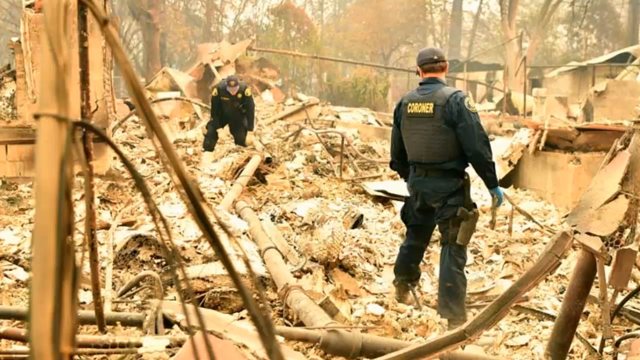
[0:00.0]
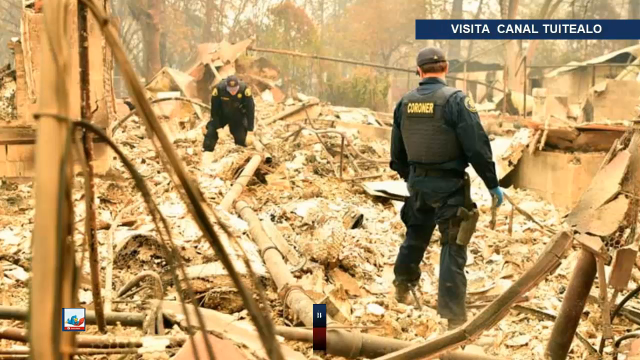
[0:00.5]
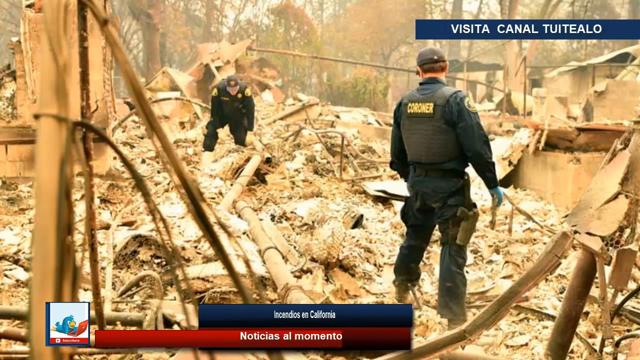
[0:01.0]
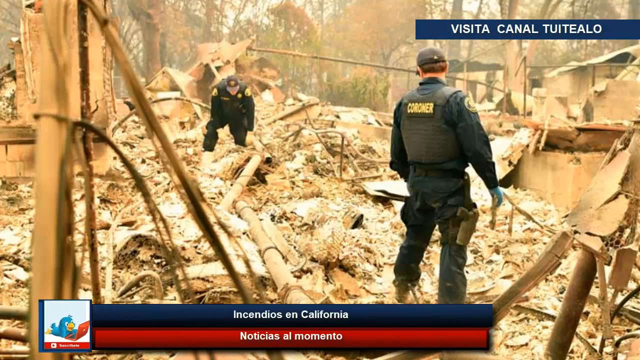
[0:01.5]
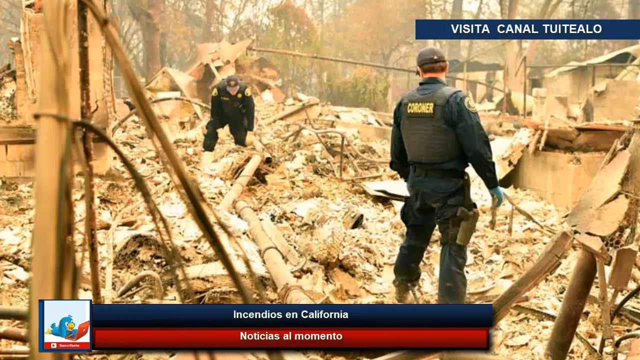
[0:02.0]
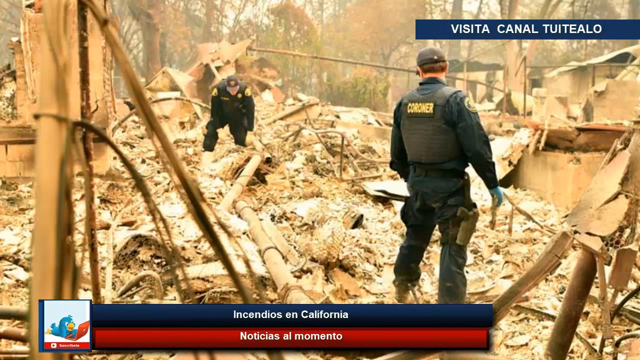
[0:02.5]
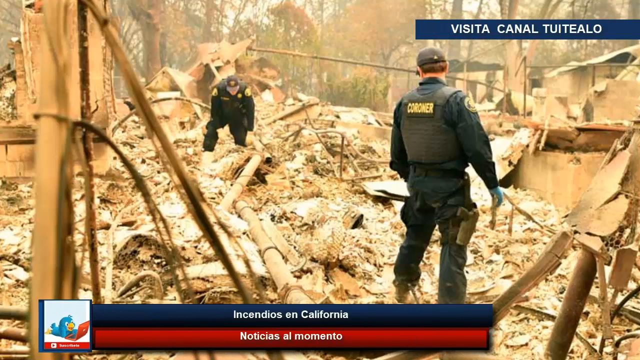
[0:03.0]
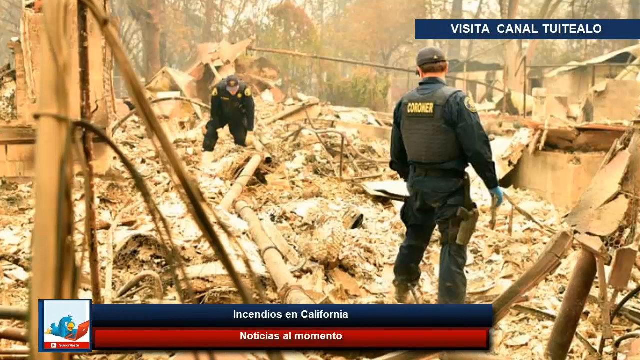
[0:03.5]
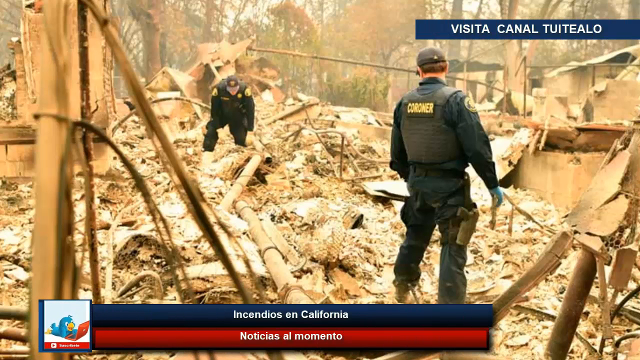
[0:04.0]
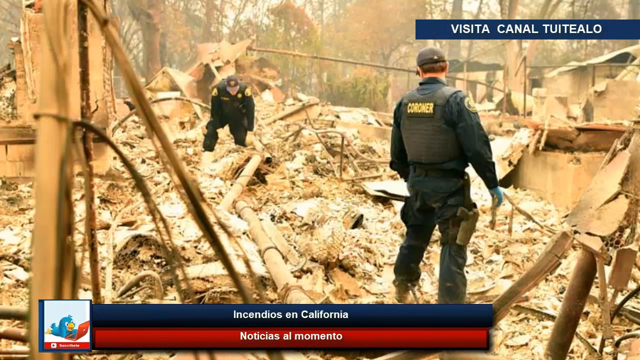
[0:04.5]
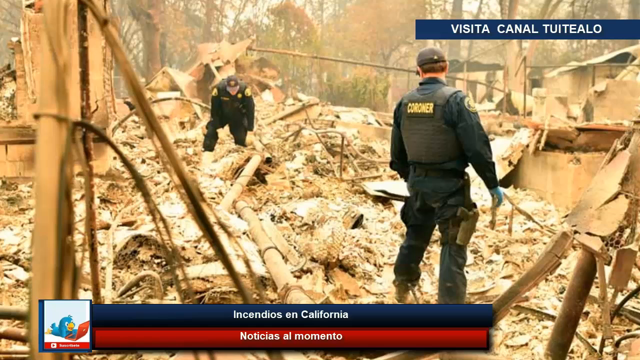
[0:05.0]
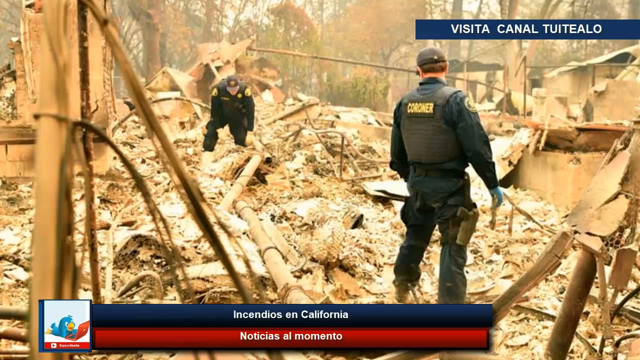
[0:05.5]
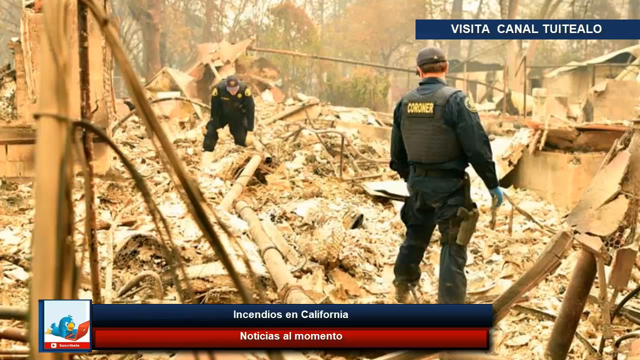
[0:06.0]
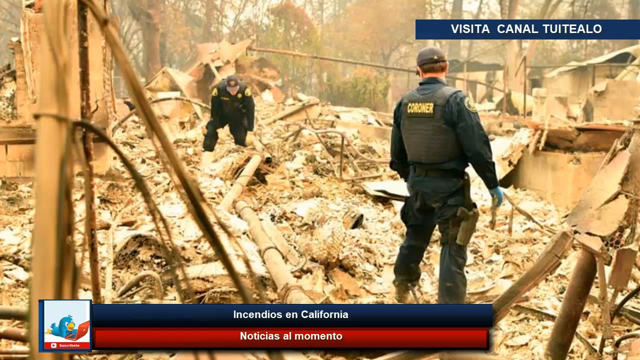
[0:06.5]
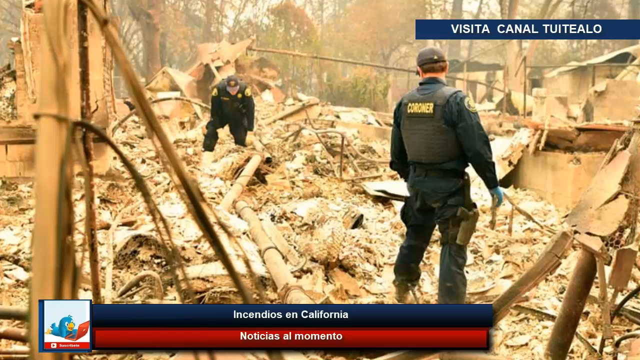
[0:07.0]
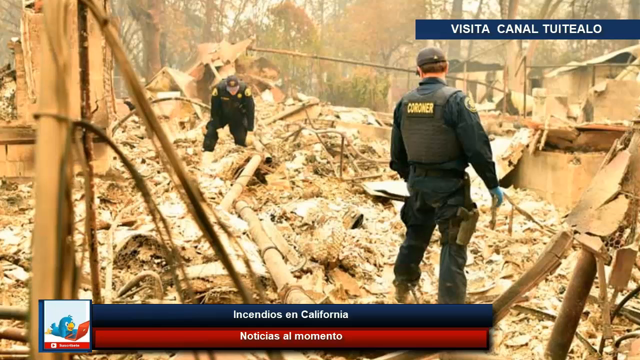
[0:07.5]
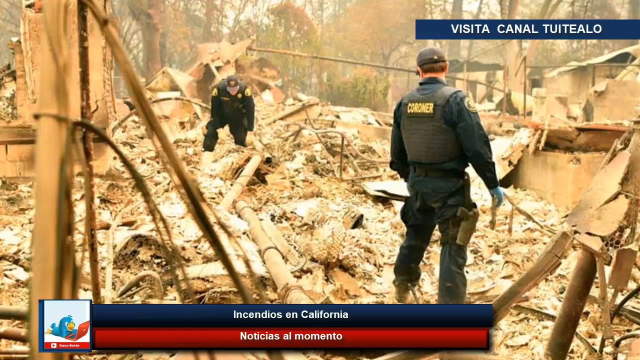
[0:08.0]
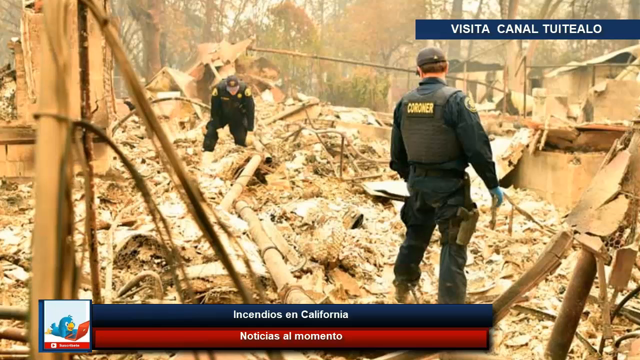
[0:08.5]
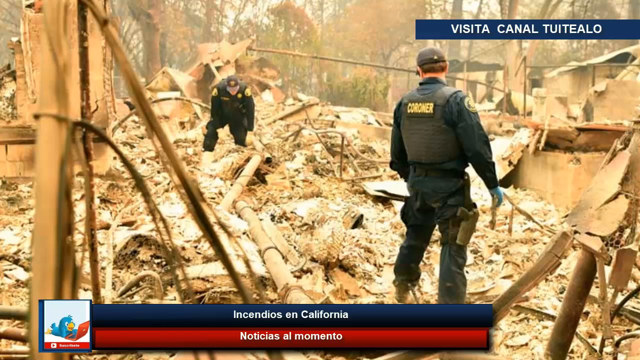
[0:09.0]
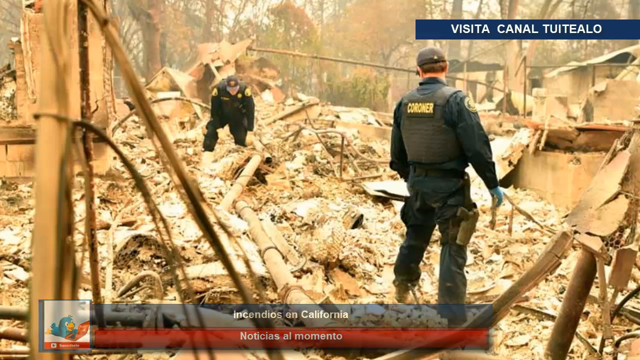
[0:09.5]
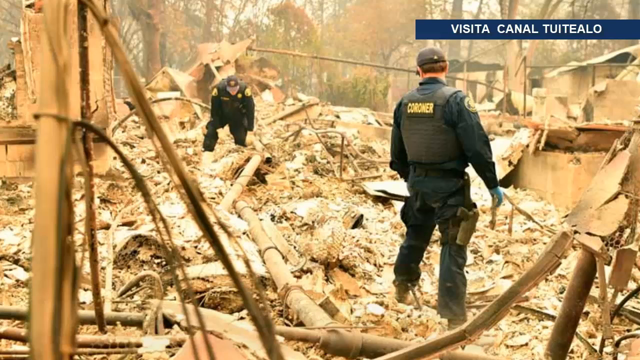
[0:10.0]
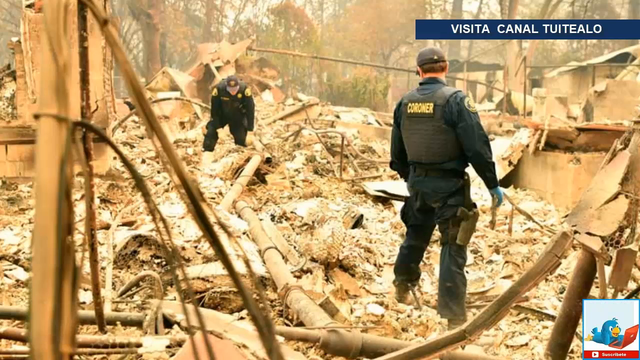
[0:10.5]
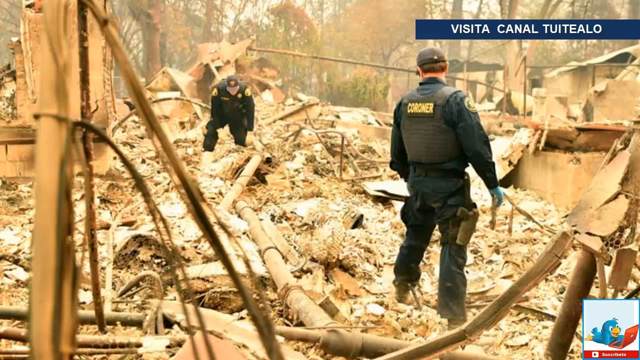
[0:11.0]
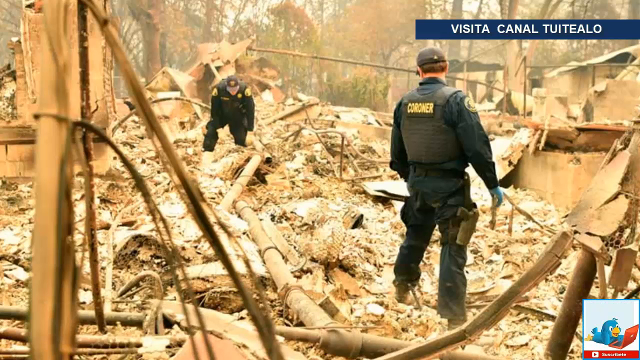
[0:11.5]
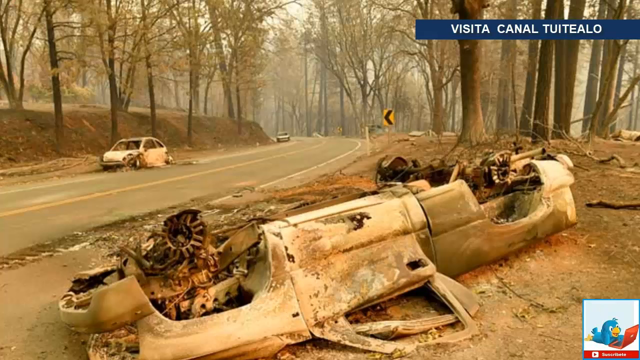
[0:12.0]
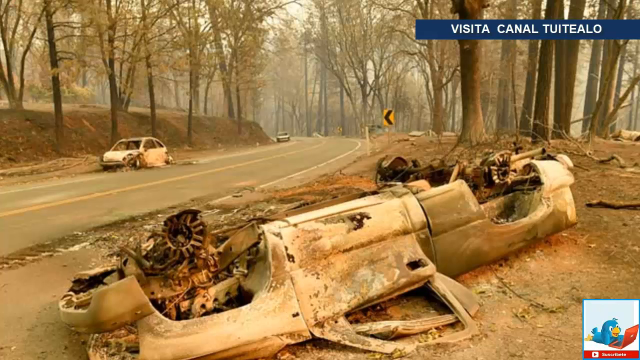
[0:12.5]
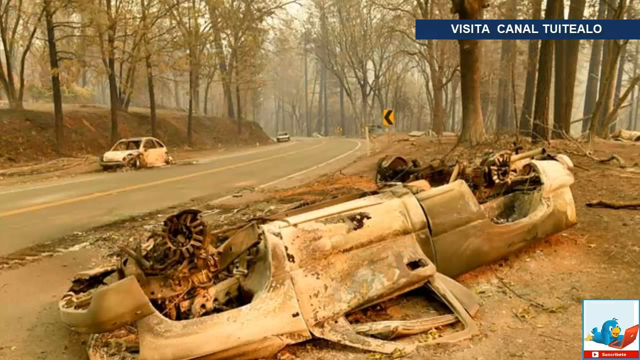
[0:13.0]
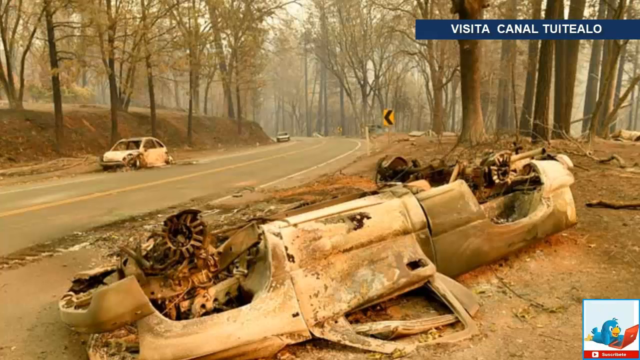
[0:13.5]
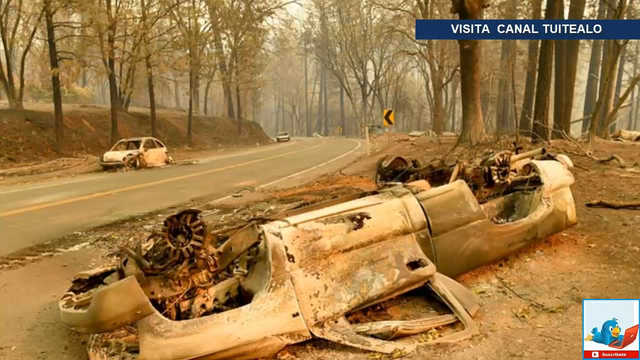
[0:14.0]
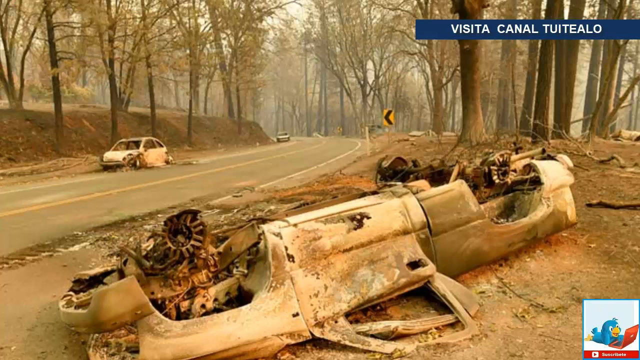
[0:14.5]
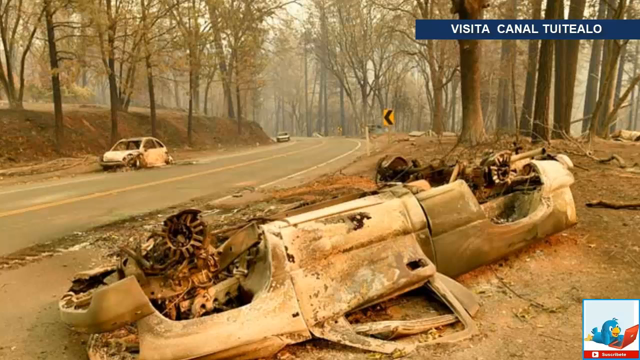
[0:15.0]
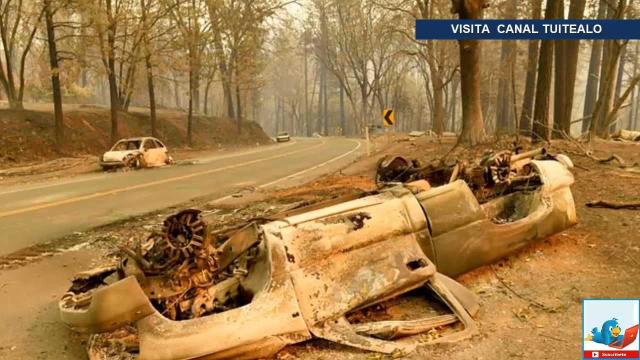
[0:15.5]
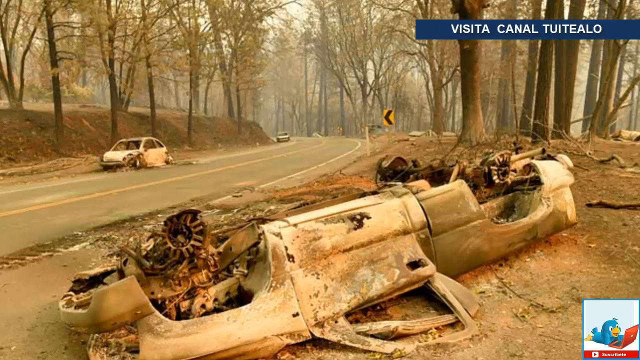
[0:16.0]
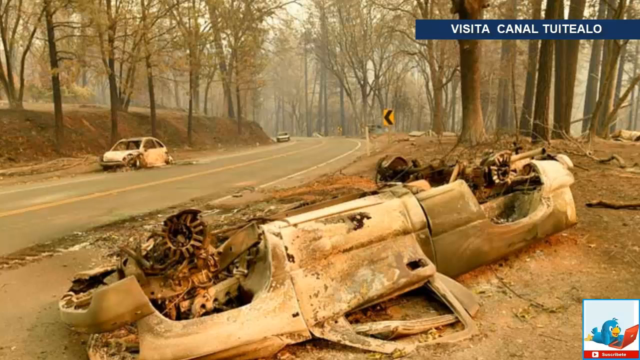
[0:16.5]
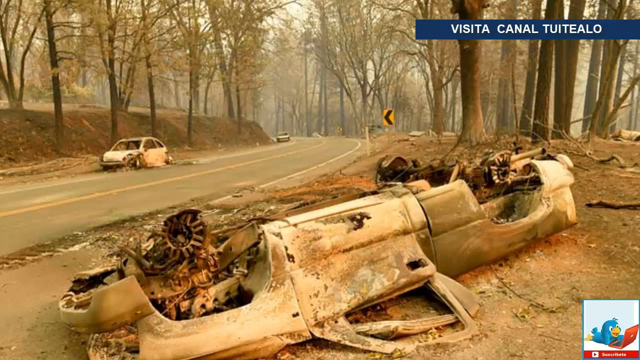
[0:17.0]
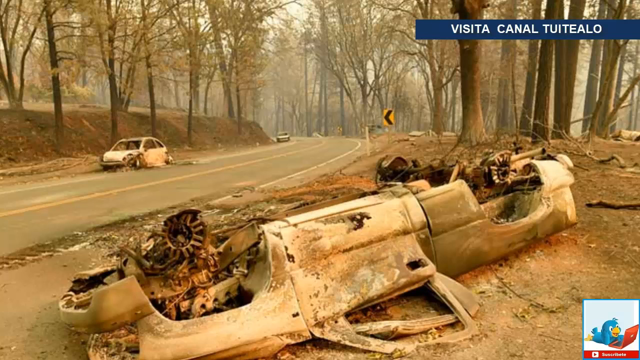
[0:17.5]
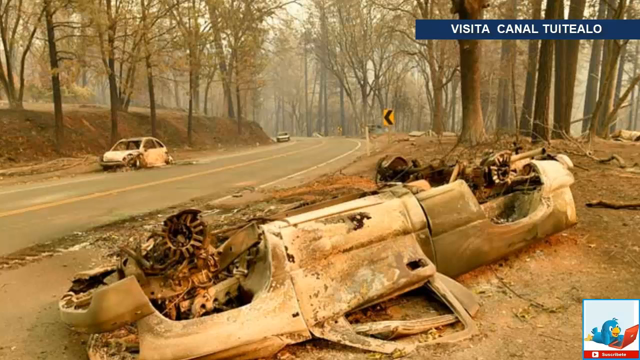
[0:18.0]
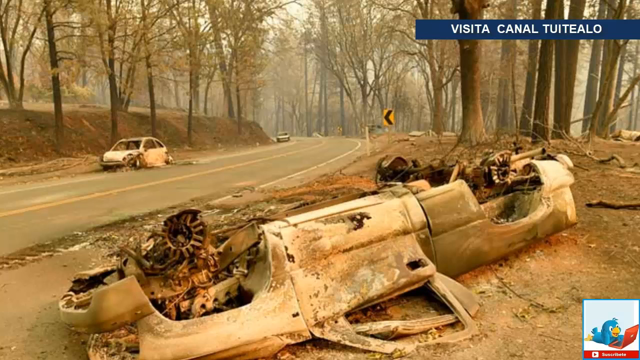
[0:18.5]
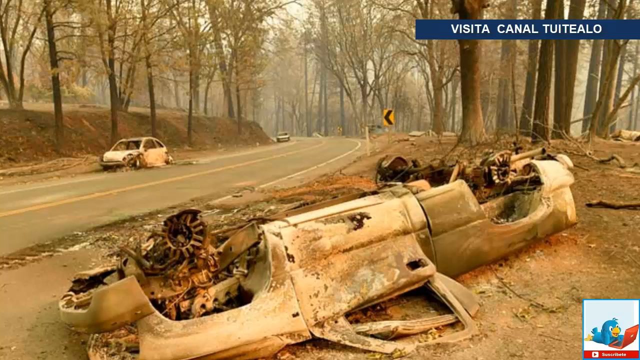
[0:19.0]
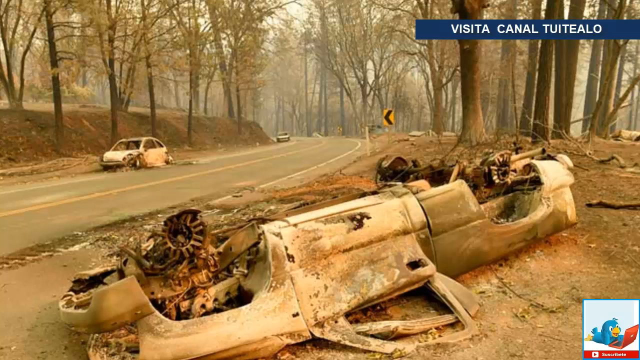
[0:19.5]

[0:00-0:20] The video opens in a forest, or what looks like a street, with a house and a person. Police officers stand outside, watching. Several cars that seem to have been involved in accidents are in the forest, standing on the side of the road. The cars are rusty and without wheels. Police officers are inside the forest, apparently trying to investigate what happened at the accident scene.